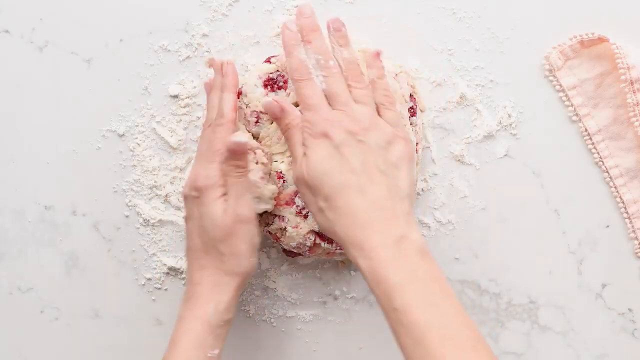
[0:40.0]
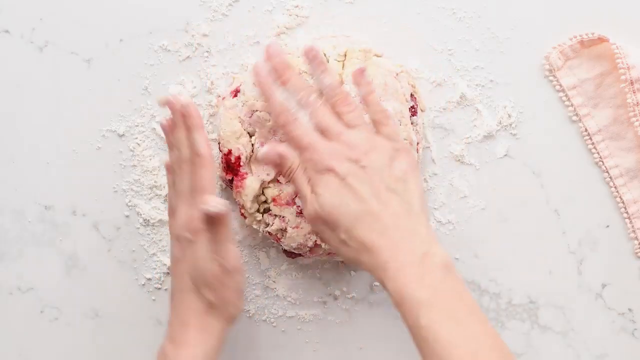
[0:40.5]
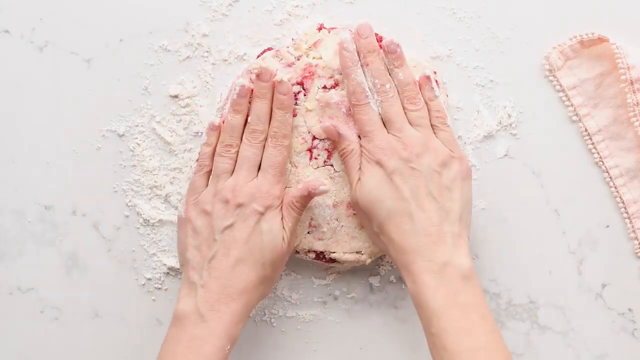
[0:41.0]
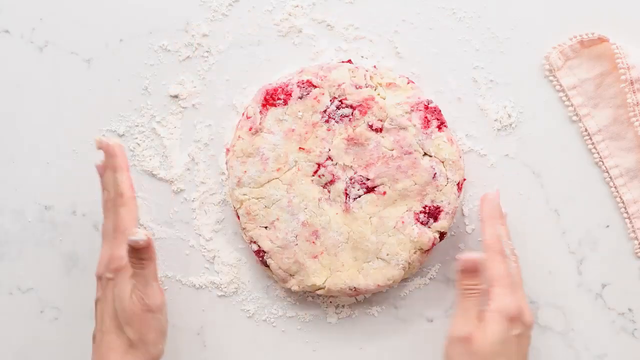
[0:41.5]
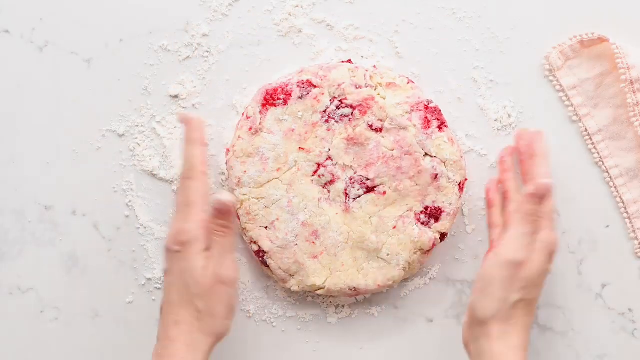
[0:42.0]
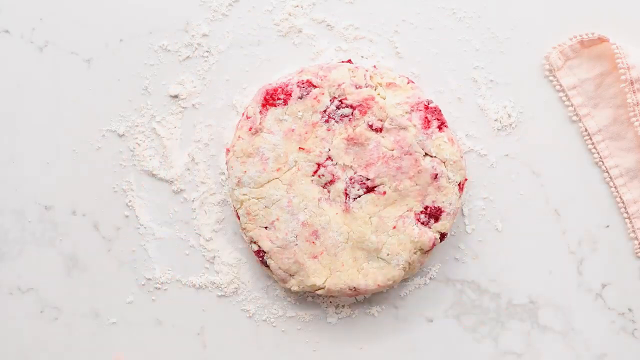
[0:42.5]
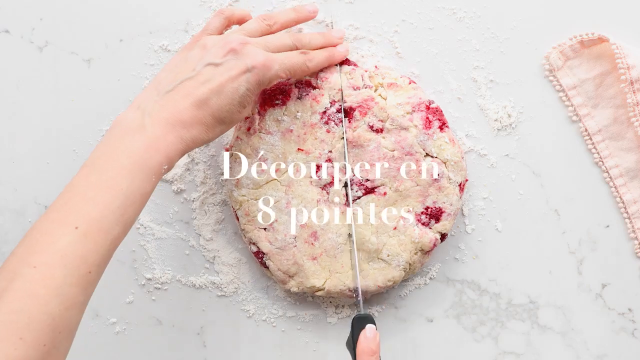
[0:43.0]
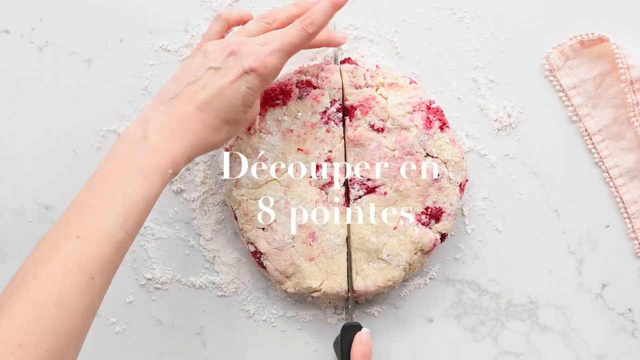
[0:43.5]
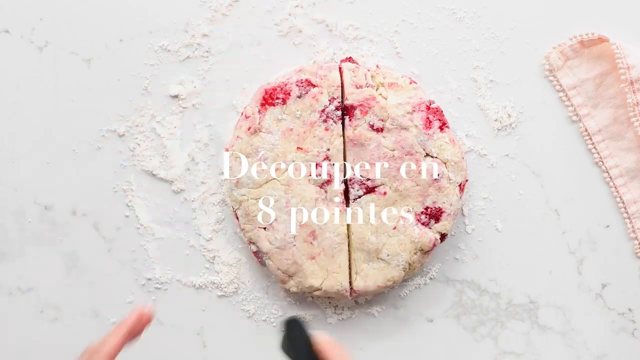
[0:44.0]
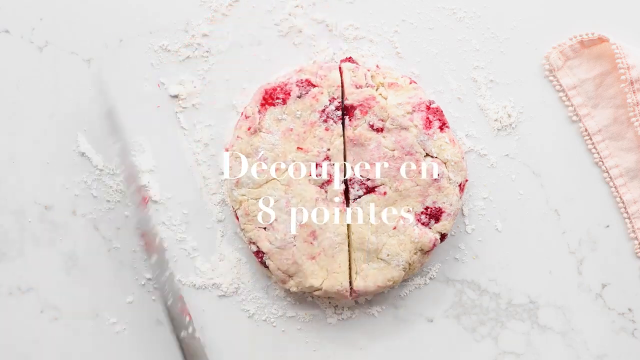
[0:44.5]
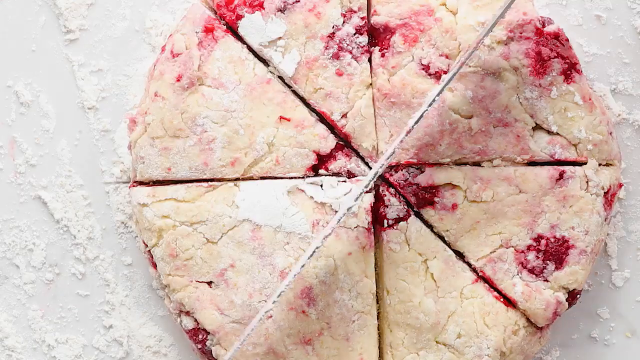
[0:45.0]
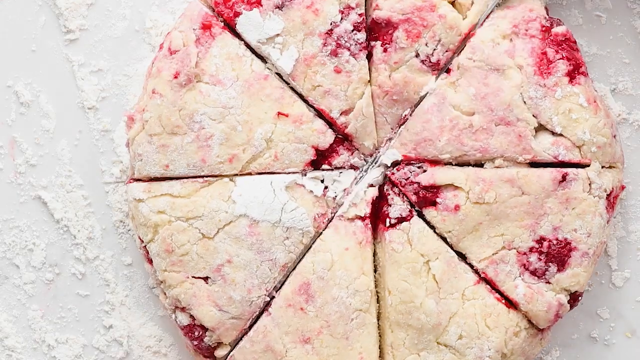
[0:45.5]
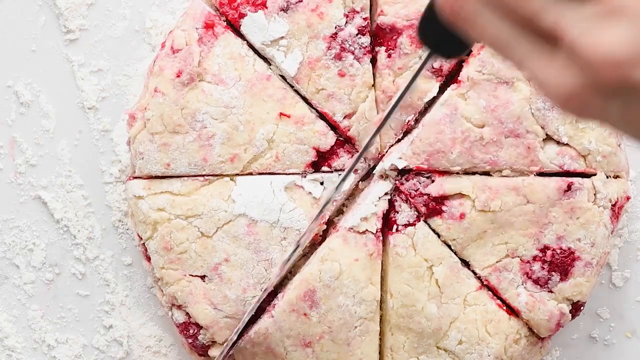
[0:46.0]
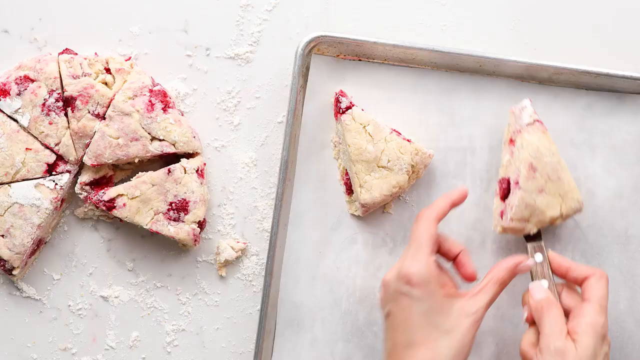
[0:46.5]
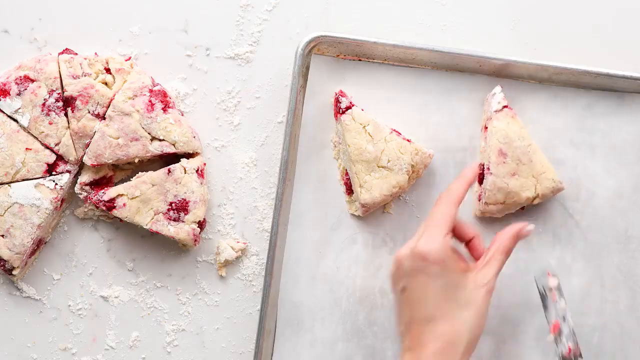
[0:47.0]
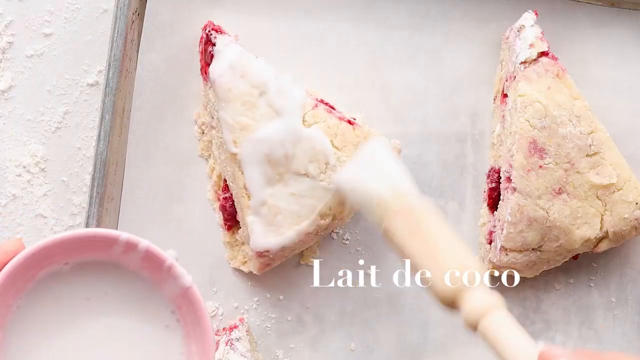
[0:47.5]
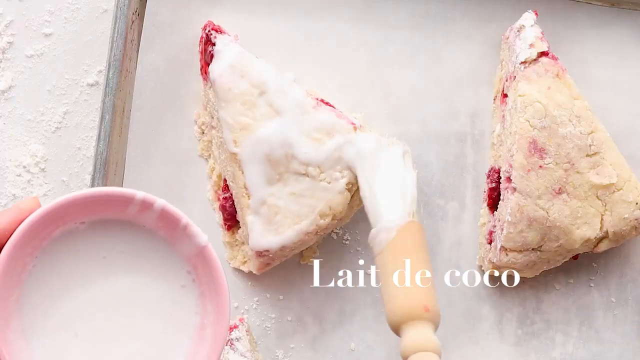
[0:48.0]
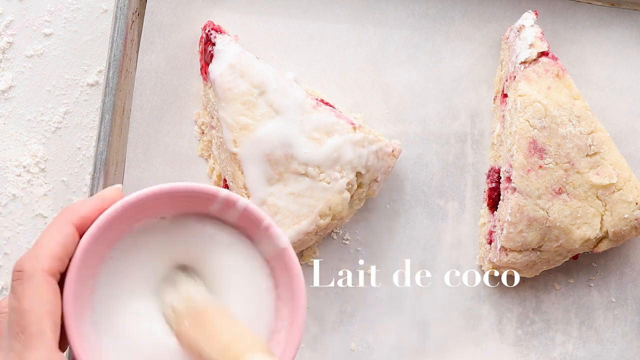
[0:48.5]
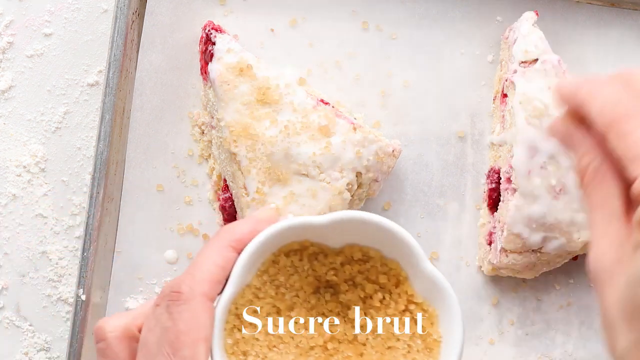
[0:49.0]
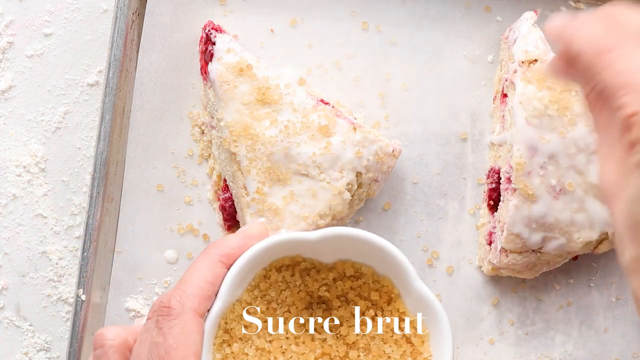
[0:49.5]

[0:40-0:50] The paste is flattened down on the kneading board until it becomes a circular, flat, cake-shaped structure. The words "Decouper en 8 pointes" appear on the screen, apparently an instruction to cut the cake into eight equal sections. The woman's hands appear holding a large, sharp knife. She first halves the cake, then the video jumps ahead to her making the final cut, resulting in eight fairly even slices. She begins lifting the individual slices off the kneading board onto a lined baking tray. She then takes a brush and a little pot of paste and begins dabbing the tops of the slices with it, as the French words "Late de coco" appear on the screen. She covers one, and the video jumps ahead to her dropping what appears to be brown sugar onto the tops of the prepared slices.